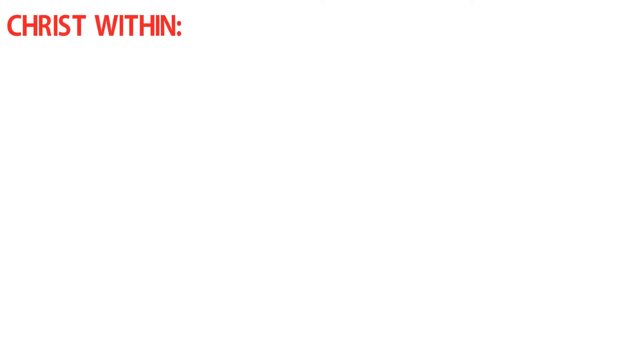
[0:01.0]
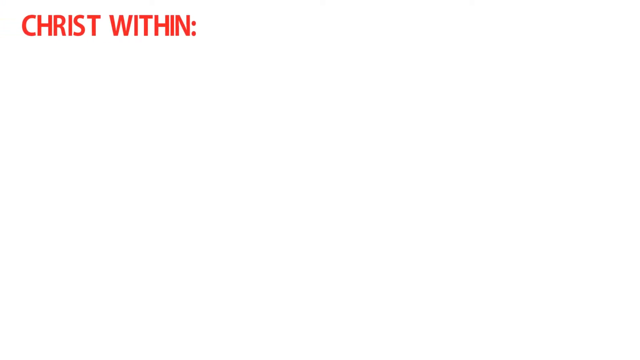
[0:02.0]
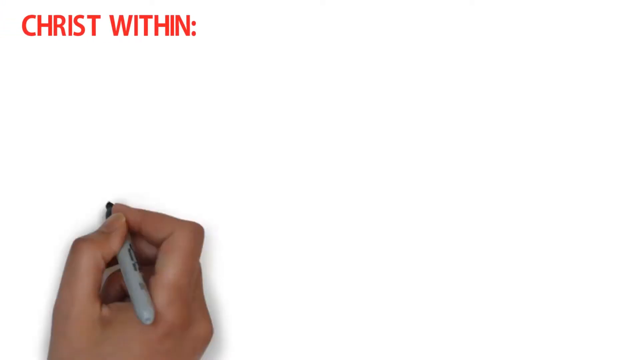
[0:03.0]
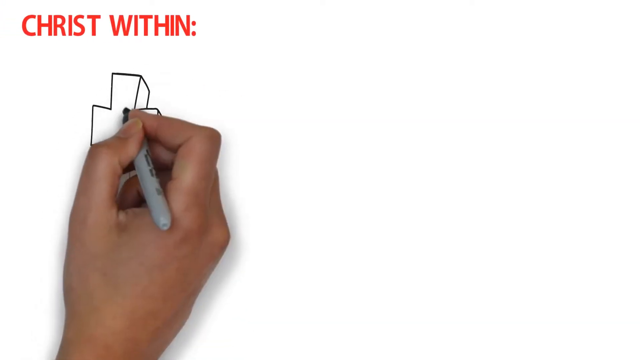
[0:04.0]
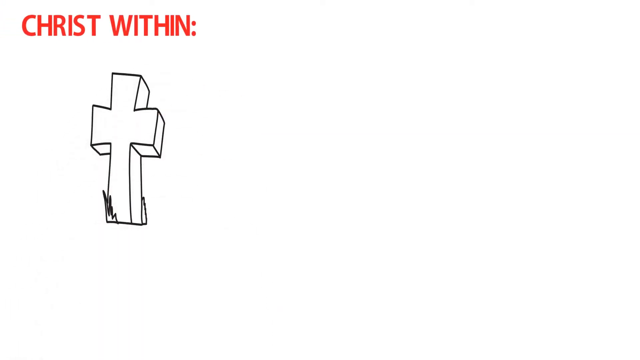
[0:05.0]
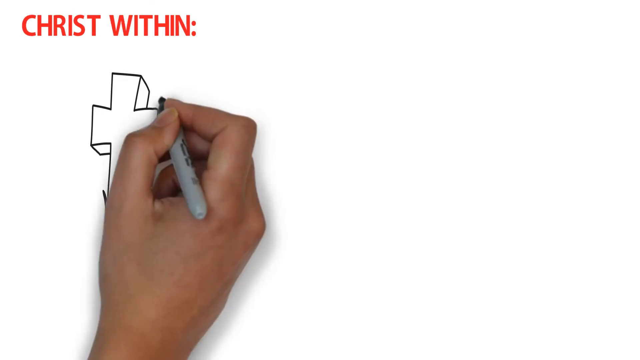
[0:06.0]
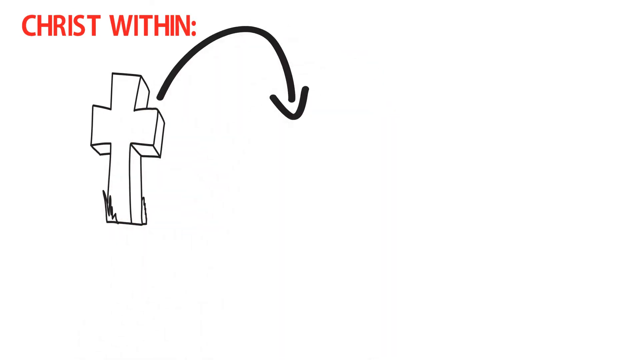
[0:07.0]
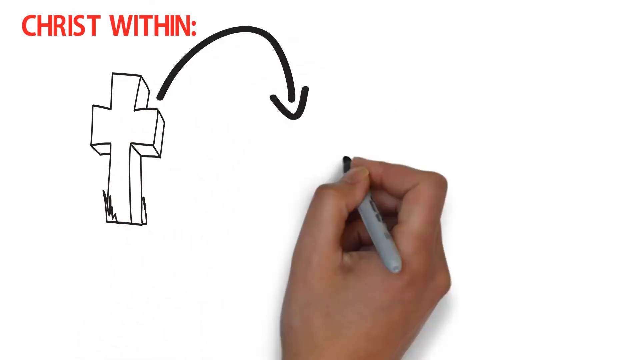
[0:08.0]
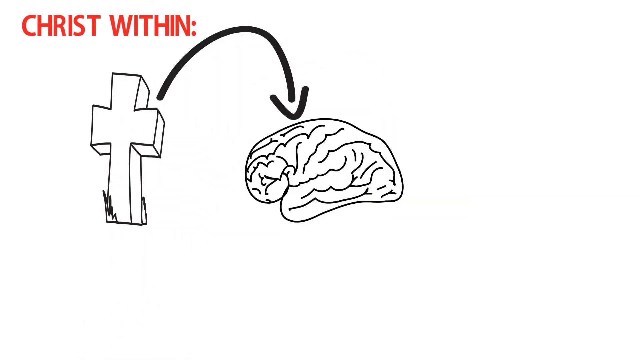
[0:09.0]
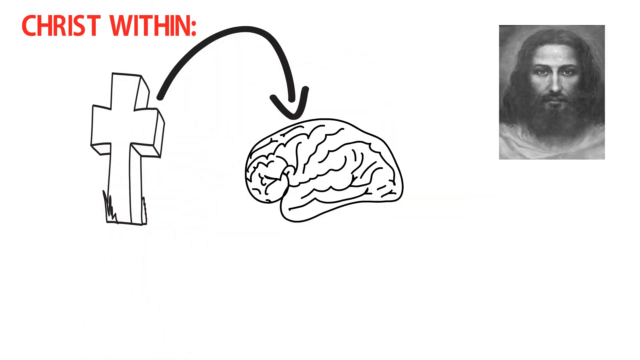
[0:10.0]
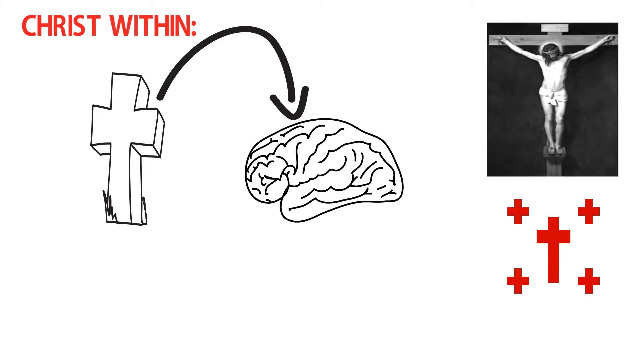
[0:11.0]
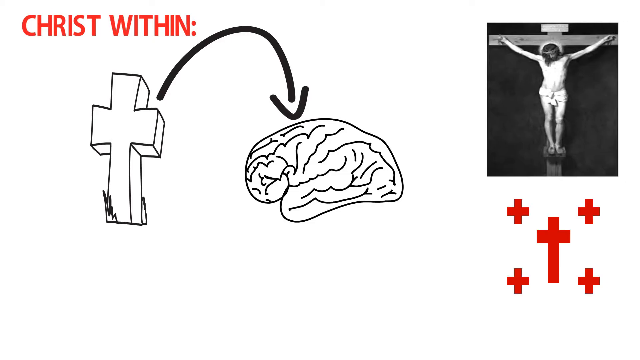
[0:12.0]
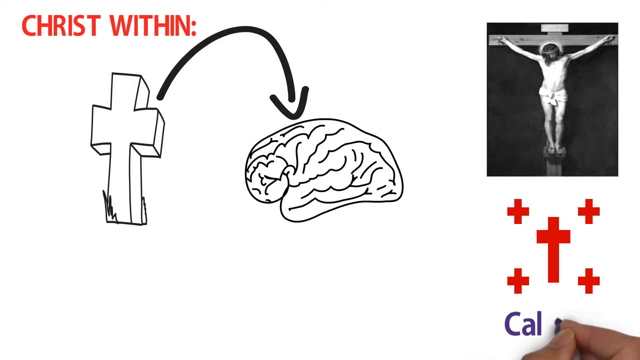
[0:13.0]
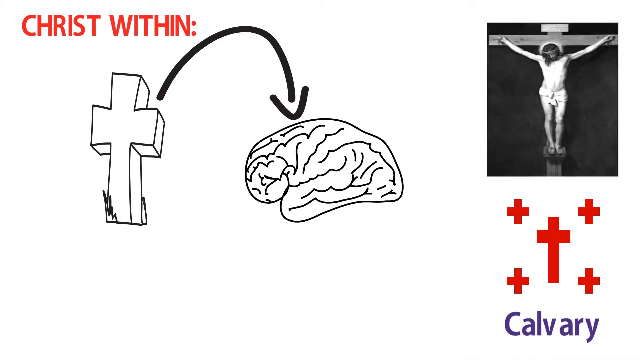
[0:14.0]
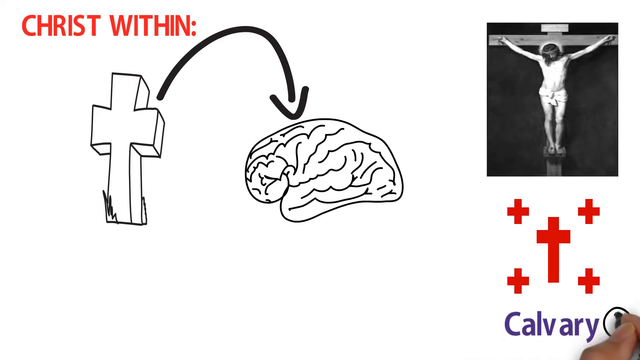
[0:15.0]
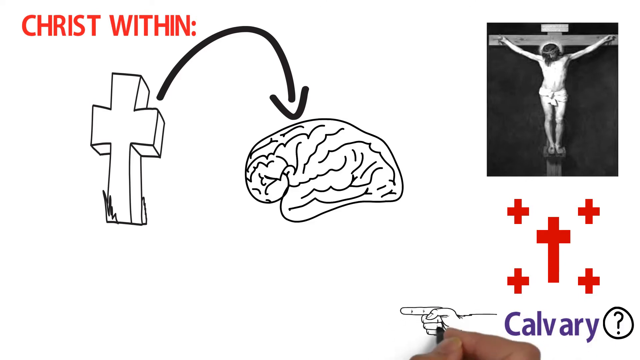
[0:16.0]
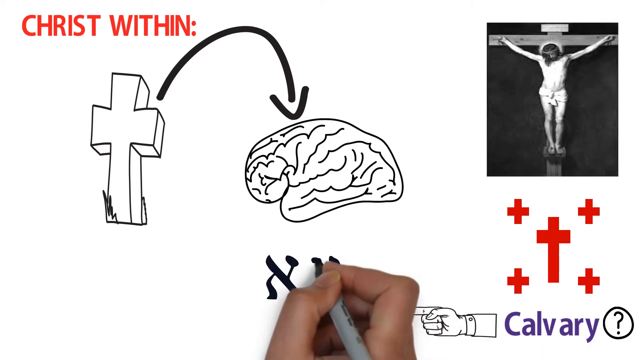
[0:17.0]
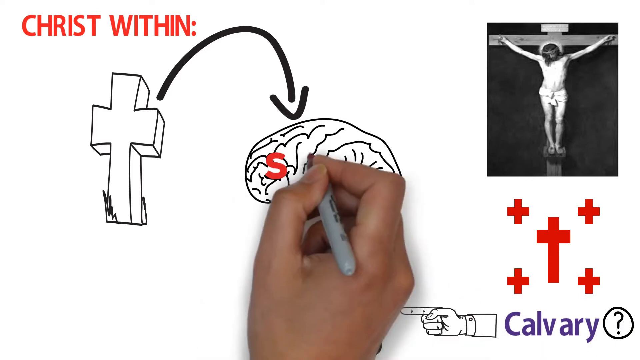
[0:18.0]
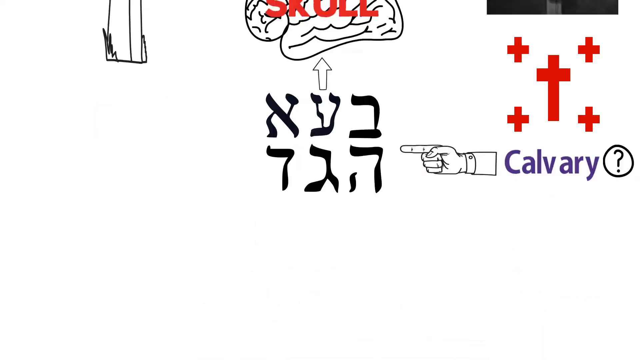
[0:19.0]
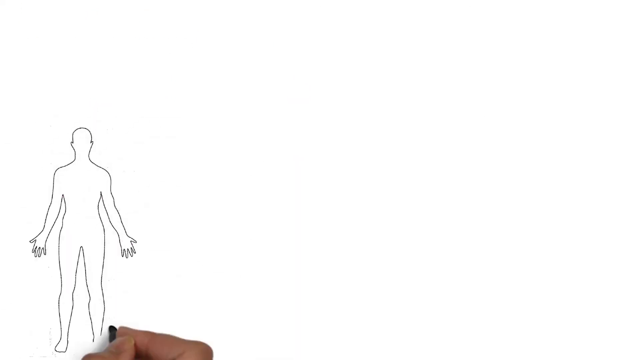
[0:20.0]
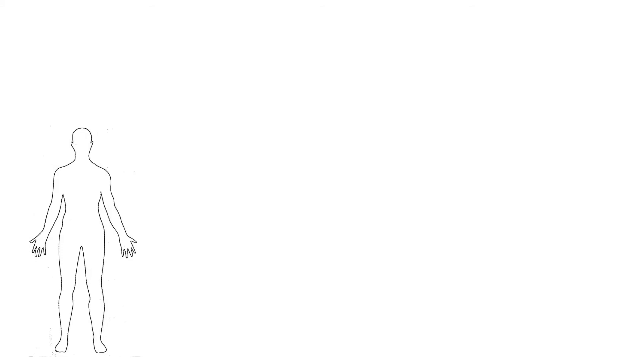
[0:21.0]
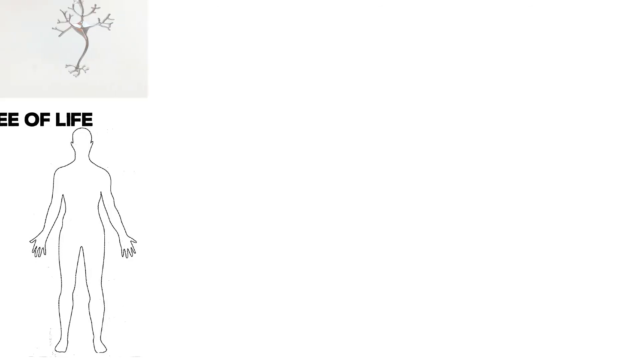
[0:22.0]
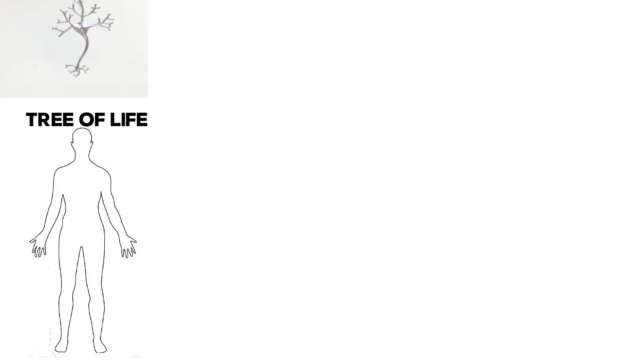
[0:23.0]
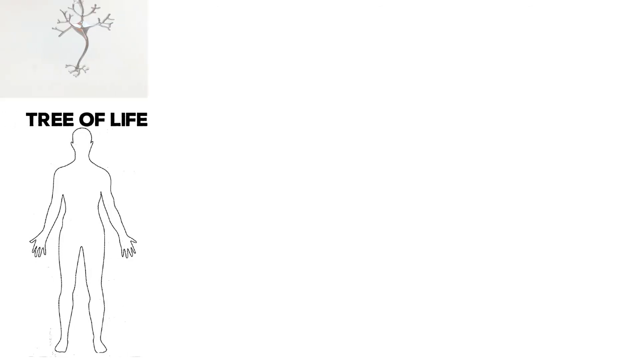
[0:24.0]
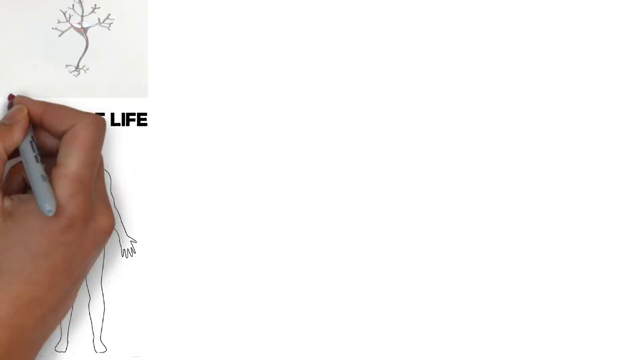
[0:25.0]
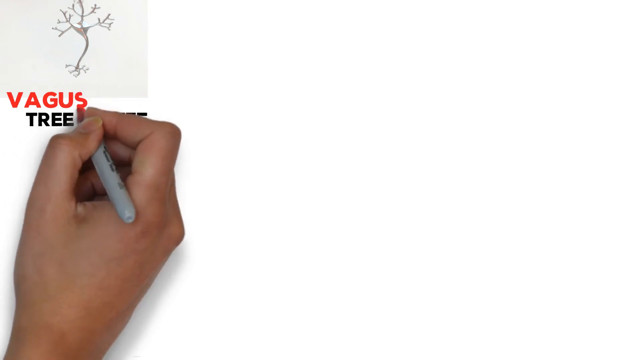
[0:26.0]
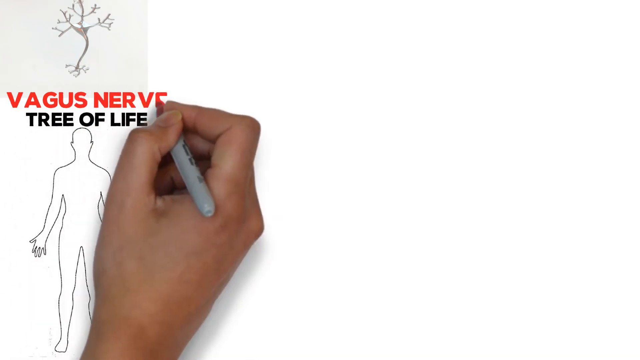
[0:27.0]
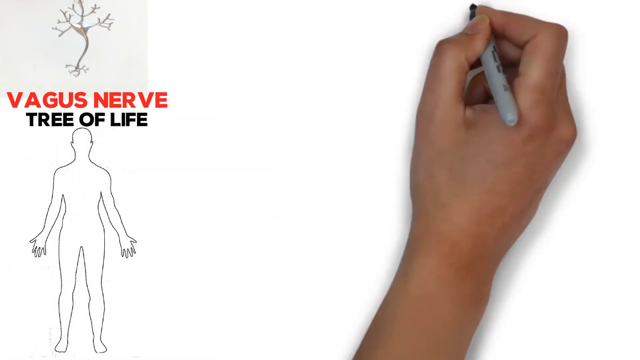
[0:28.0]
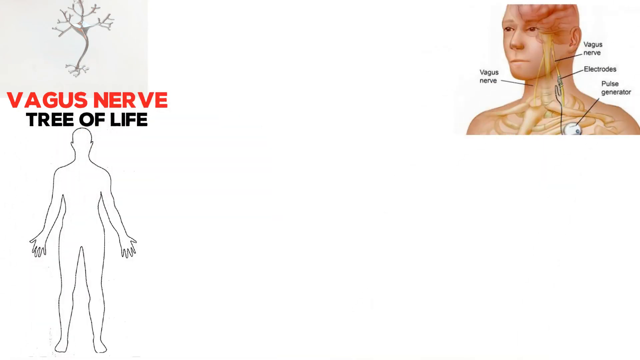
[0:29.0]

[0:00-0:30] The video opens on a white screen. After a few seconds a line of text appears reading "Christ within:", with a colon after the words. On the left side, a hand draws a cross; it is 3D and curved rather than straight, and it points to a human skull or brain that the hand has drawn. On the right side, a black-and-white photo of Jesus Christ pops up, followed by a photo of Jesus Christ on a cross, also on the right. In the lower right, five red crosses pop up below the photo of Christ on the cross. The same hand writes "Calvary?" in the lower right, then draws another hand pointing to more text. The hand writes the word "skull" inside the drawn skull or brain. Next, a drawn human body appears in the lower left, and at the top there is an image that looks like a tree, with the text "Tree of Life" below it. The hand writes "vagus nerve" below the tree-like image. On the right side, a depiction of human anatomy appears, with "vagus nerve", "electrodes", "pulse generator" and "vagus nerve" again shown on the image.